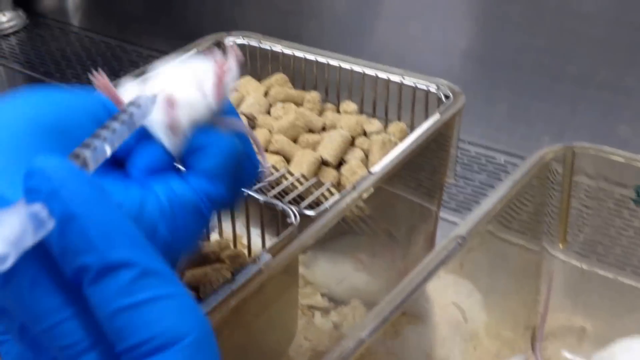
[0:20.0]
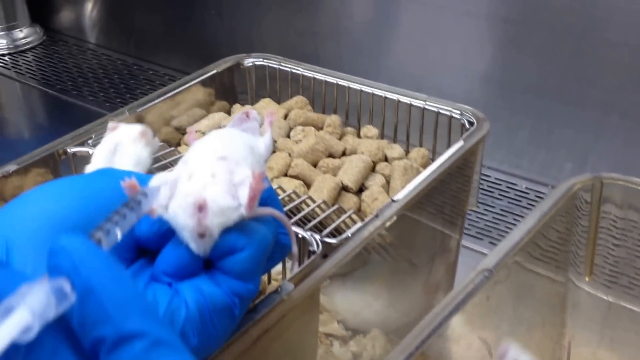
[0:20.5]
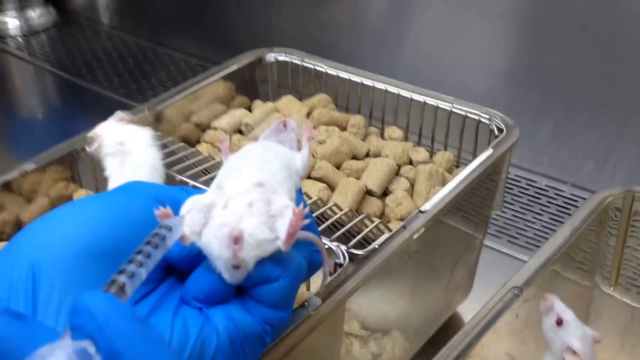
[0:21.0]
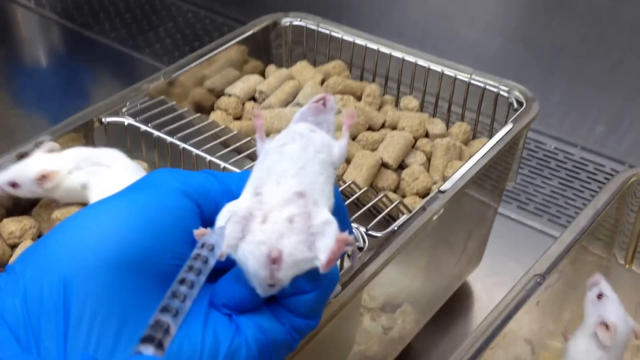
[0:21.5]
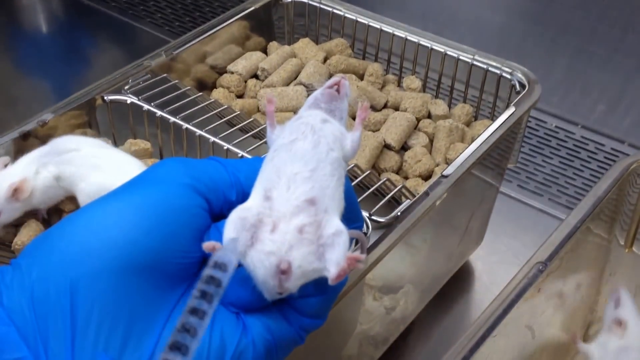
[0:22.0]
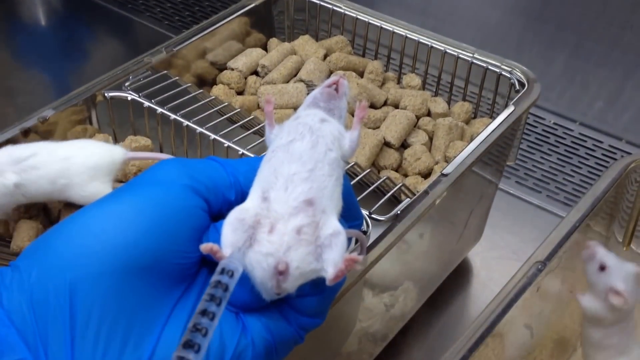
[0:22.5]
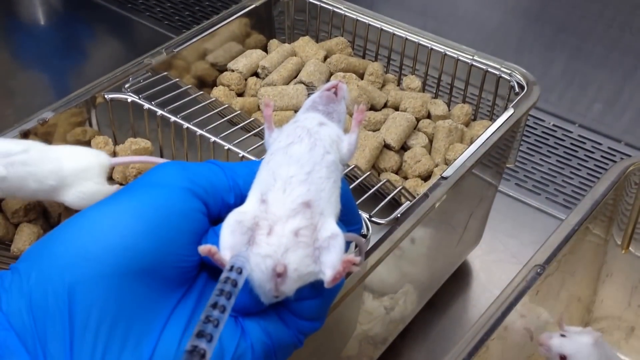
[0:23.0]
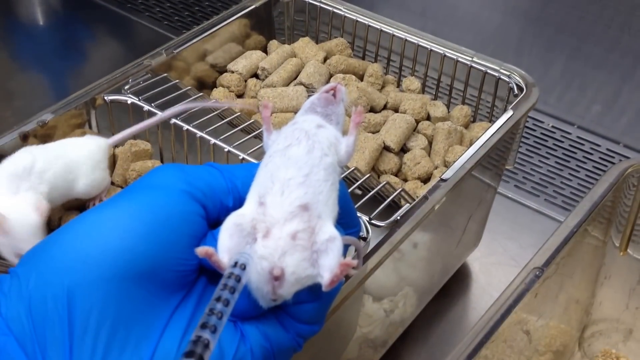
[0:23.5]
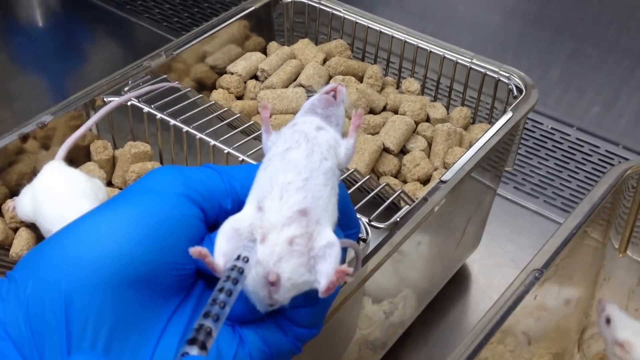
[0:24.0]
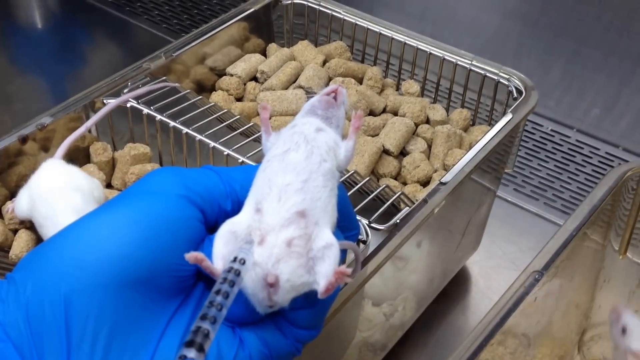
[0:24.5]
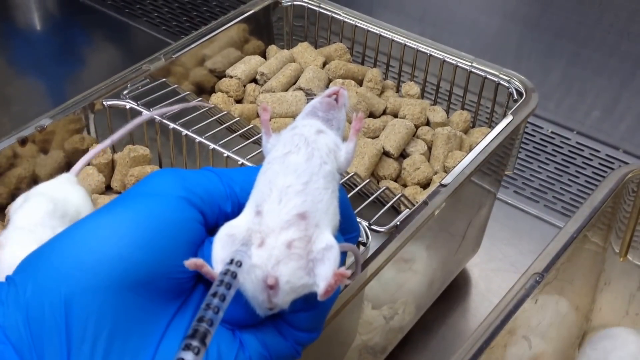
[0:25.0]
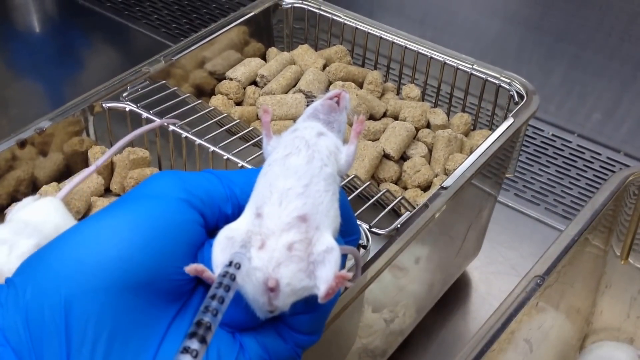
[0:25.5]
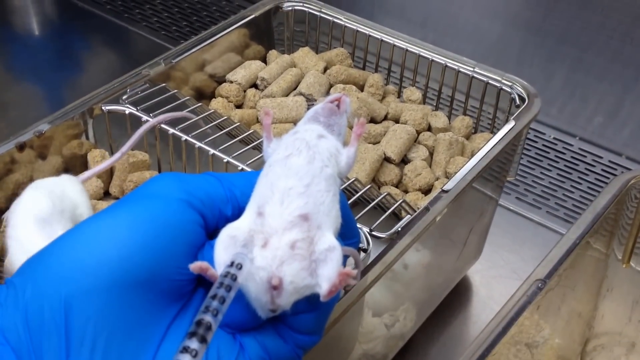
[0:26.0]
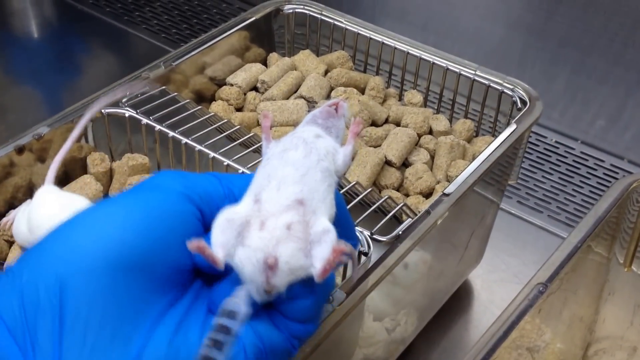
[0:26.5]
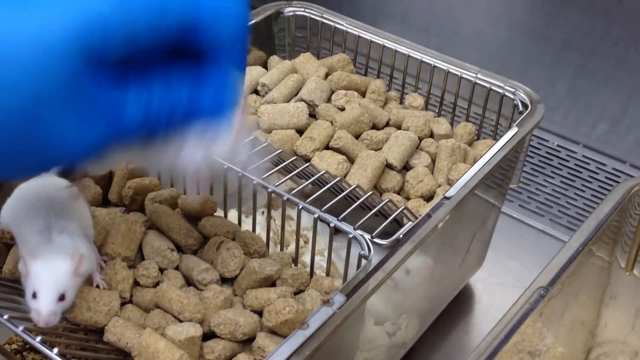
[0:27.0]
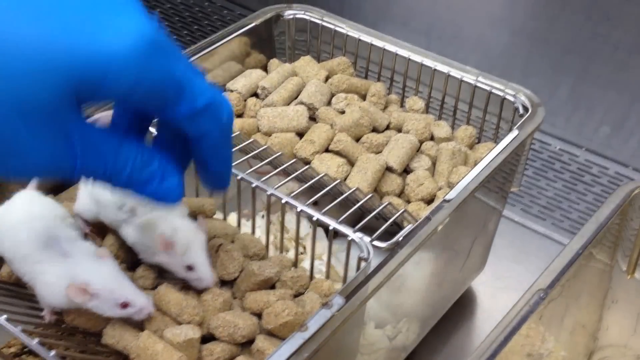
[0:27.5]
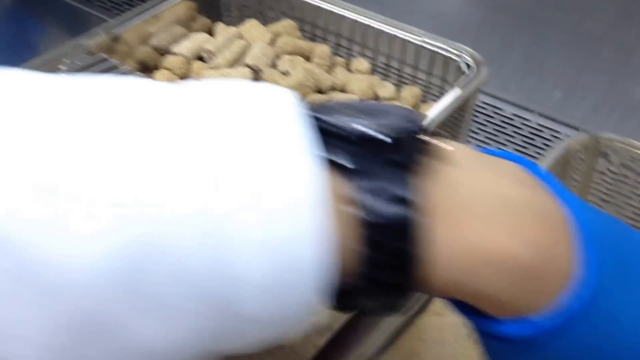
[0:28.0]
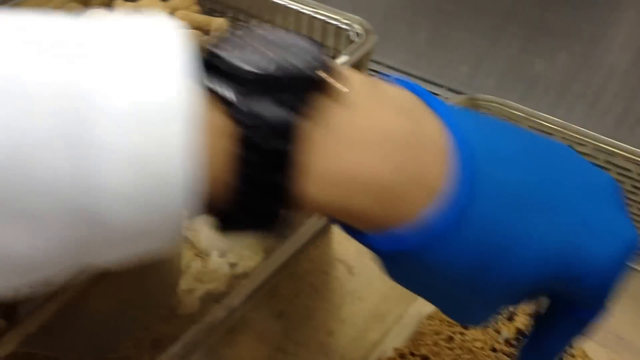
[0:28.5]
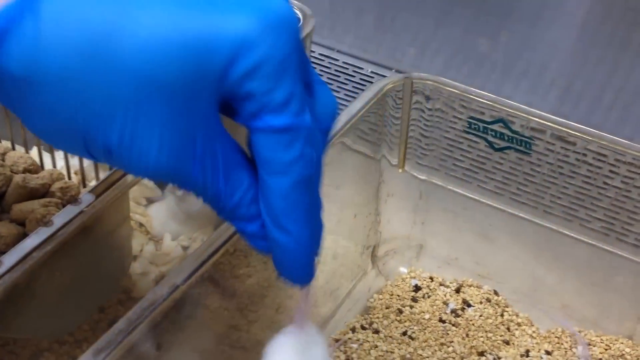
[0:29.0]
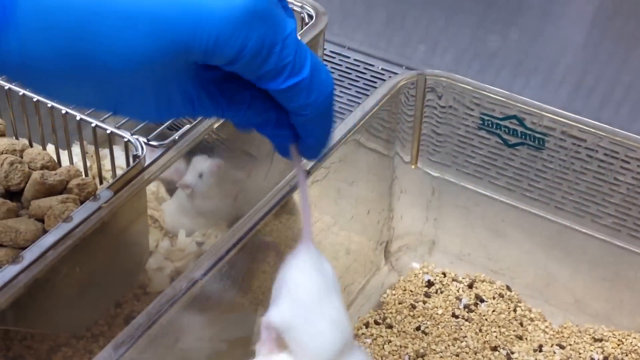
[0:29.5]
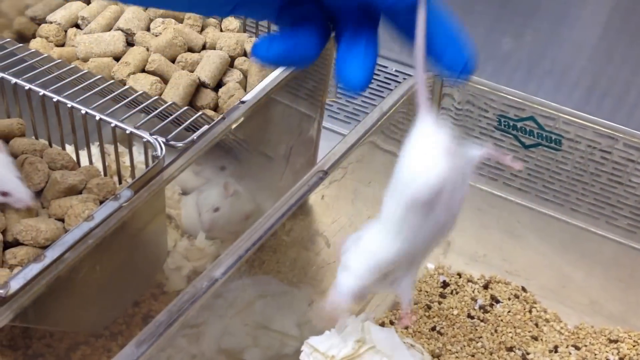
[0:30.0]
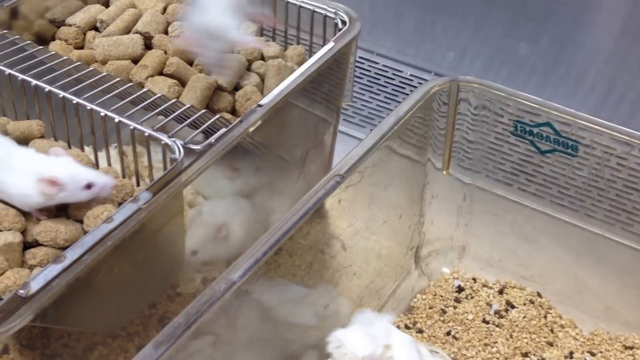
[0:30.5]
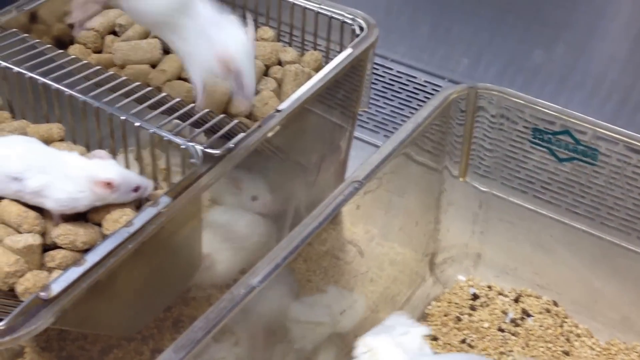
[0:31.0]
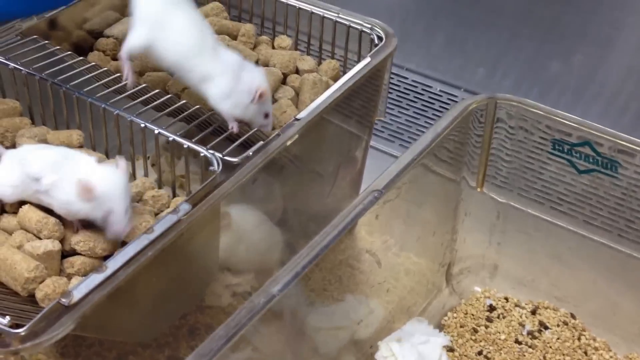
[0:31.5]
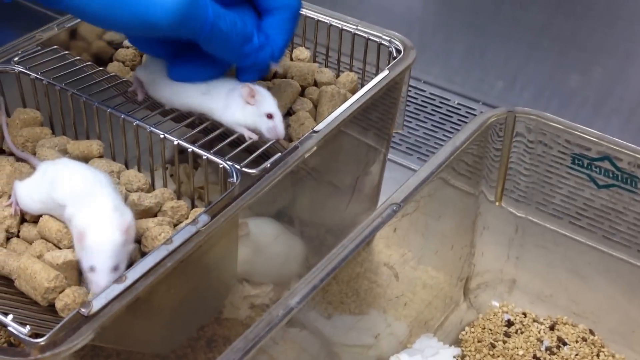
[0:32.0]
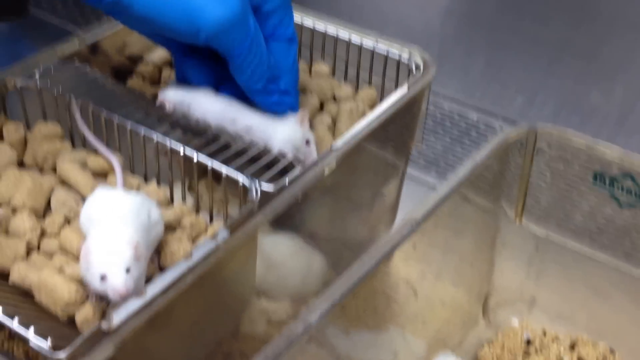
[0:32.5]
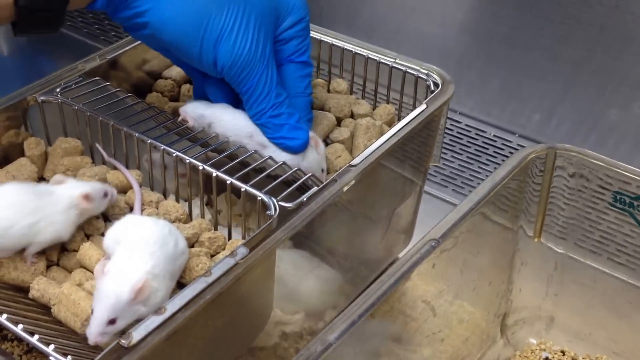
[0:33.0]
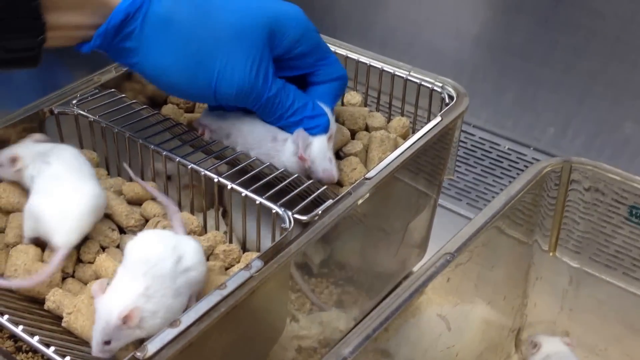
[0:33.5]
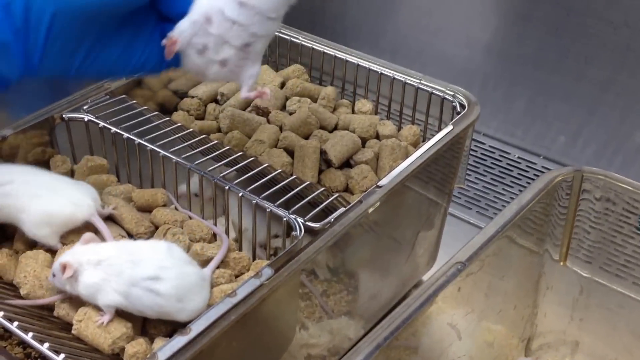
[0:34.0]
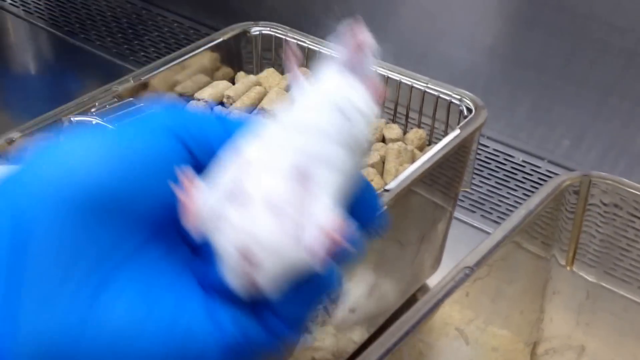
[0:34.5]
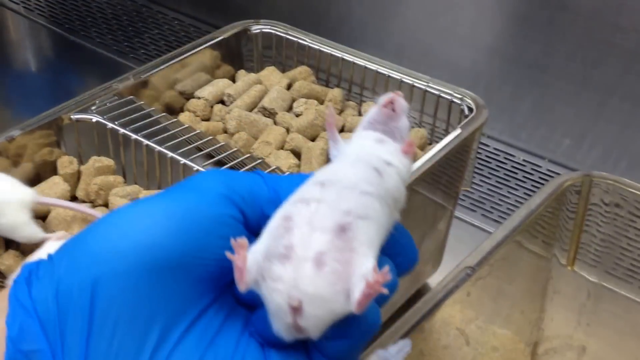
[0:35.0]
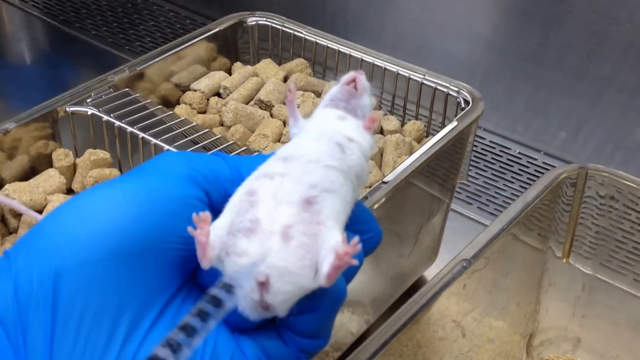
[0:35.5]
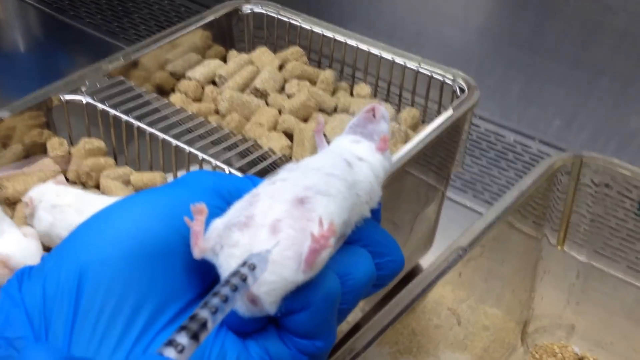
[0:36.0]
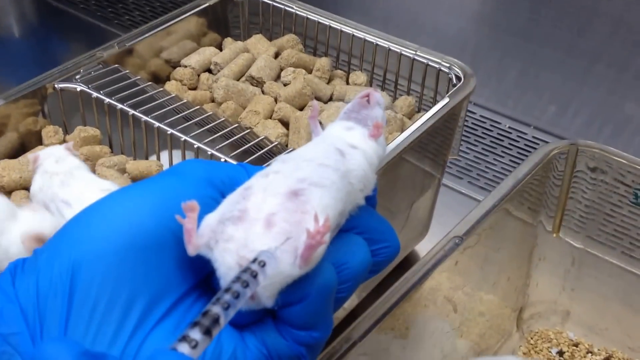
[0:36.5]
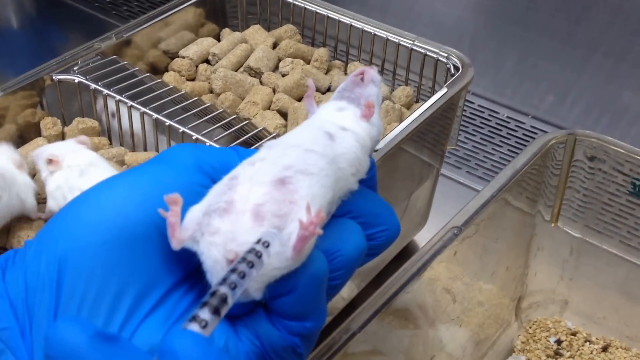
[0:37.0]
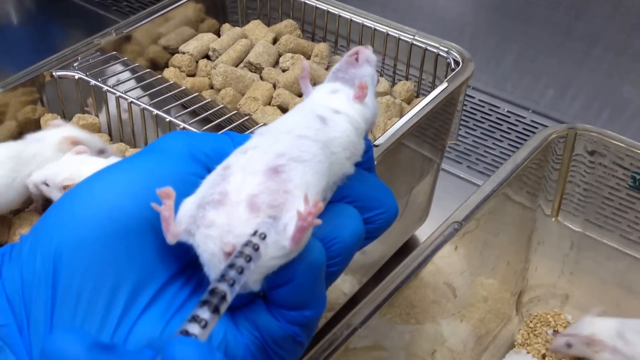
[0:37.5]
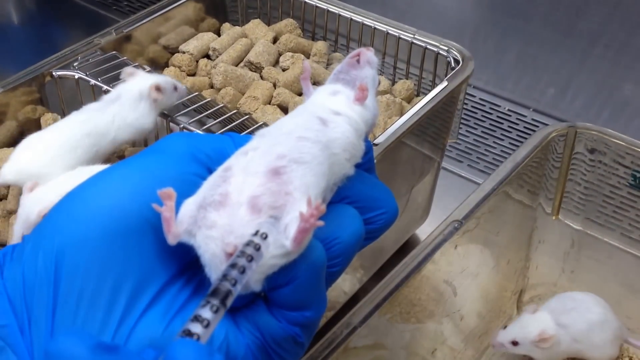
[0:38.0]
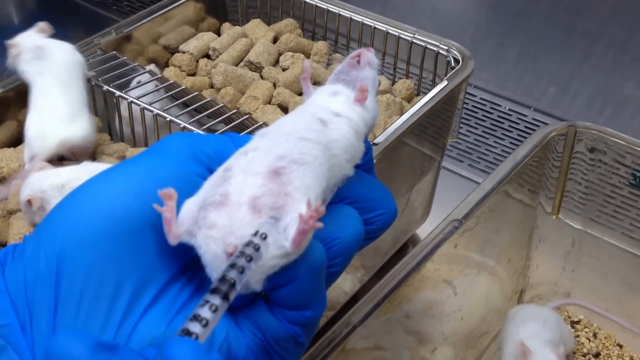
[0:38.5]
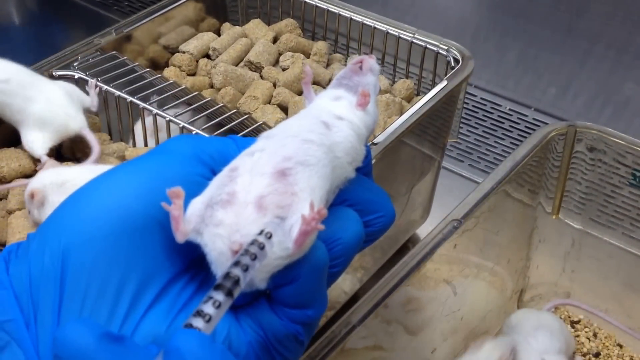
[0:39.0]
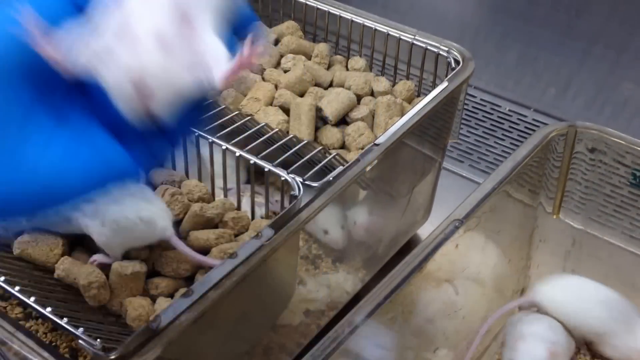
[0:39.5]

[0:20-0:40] Another mouse is held supine and seems a bit comatose, but when it is dropped down it starts wriggling about. Another mouse is picked up by its tail and put into a little tub of pellets, where it has a brief nibble; it is then held on its back, where it seems really still, and is injected in the same way, with the same syringe, by the operator's gloved hands. The experimenter wears blue latex gloves and picks up a mouse from a container of mice with their left hand, very briefly puts it into a tub of beige pellets, and before the mouse can eat much, picks it up again and flips it onto its back. The mouse kind of freezes and looks almost stiff or dead, though it is not; it stops moving and lies flat with its paws out. While it is held in that position, the operator's right hand, holding a syringe full of clear liquid, comes in and injects the mouse in its tummy, pushing in about 10 or 20 ml of the fluid, and the mouse is put down in a second tub of pellets. It is a small production line of mouse injections by an operator who appears practised. Many mice are in the picture. The setting is clinical, with steel and Perspex, apparently a lab, and this looks like an experiment being conducted on mice.